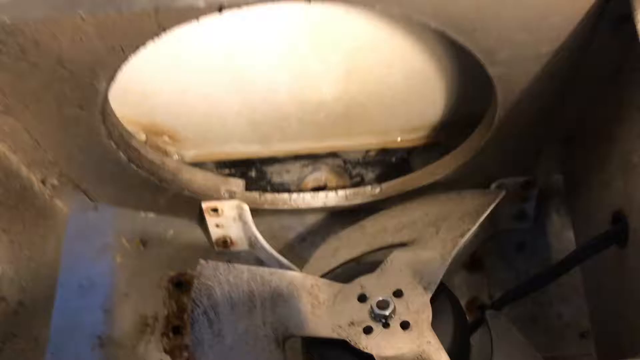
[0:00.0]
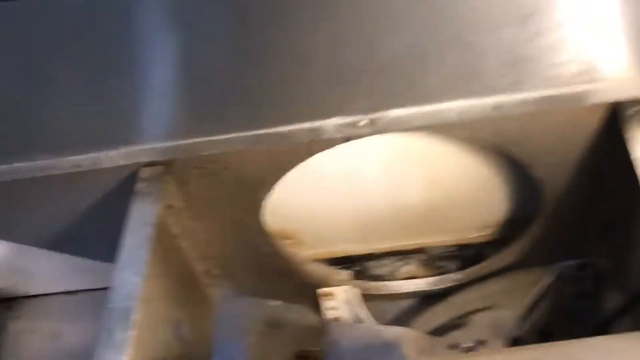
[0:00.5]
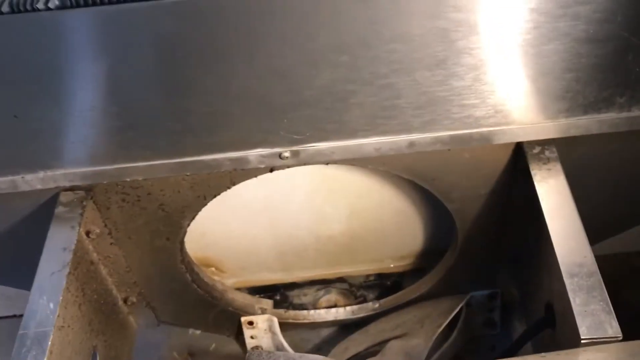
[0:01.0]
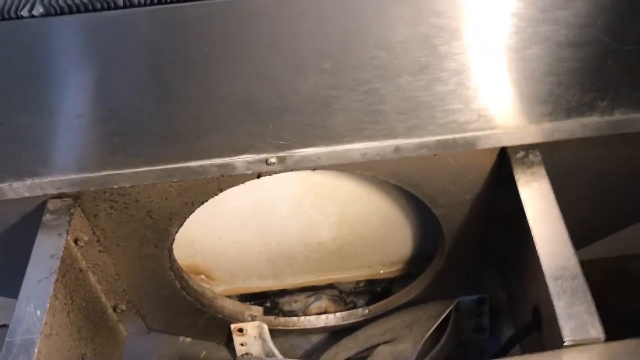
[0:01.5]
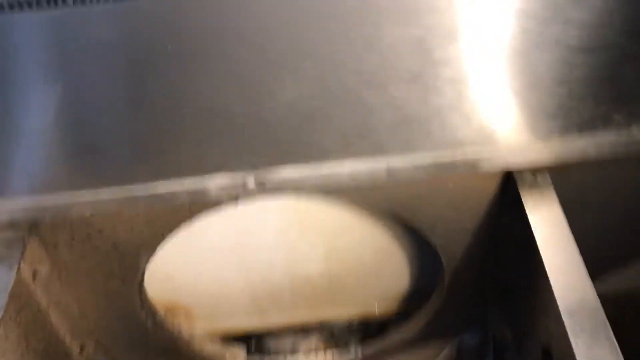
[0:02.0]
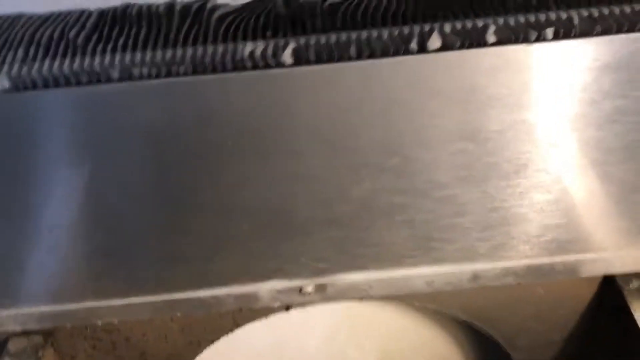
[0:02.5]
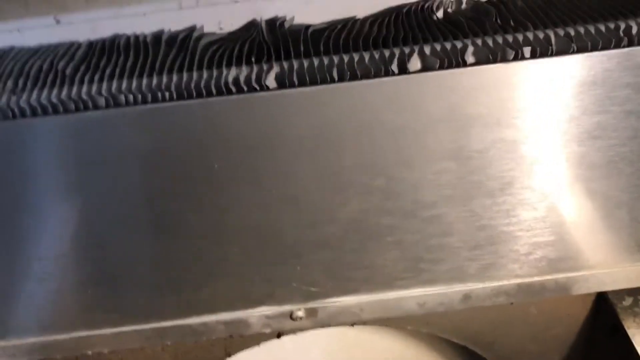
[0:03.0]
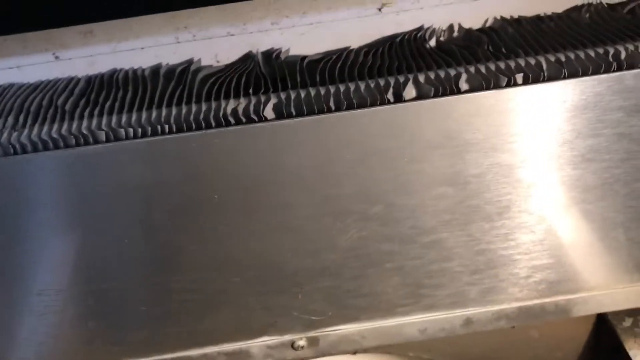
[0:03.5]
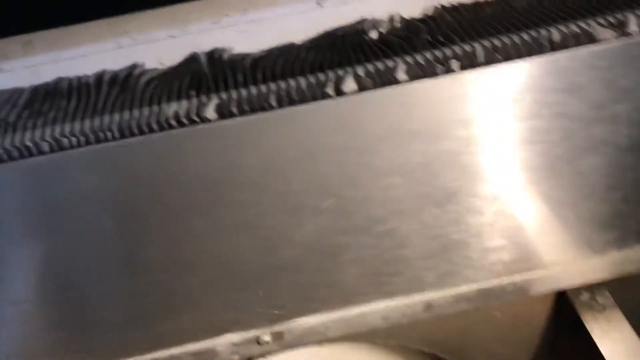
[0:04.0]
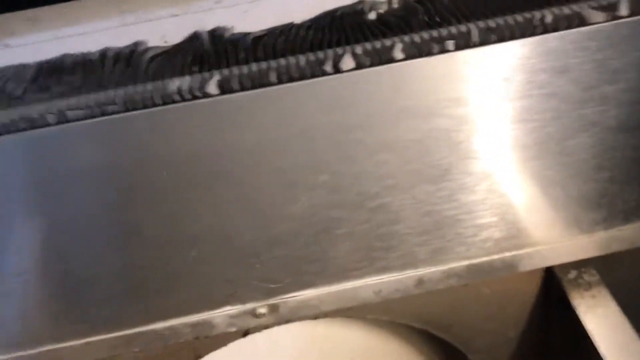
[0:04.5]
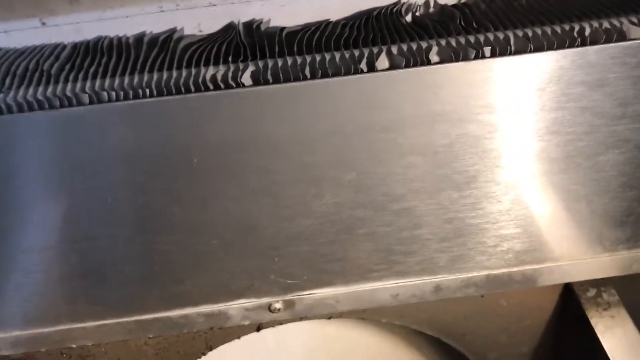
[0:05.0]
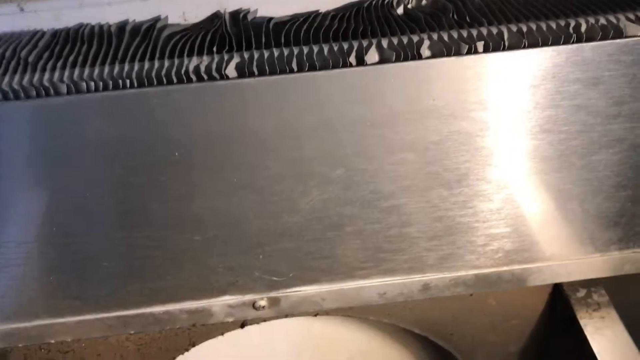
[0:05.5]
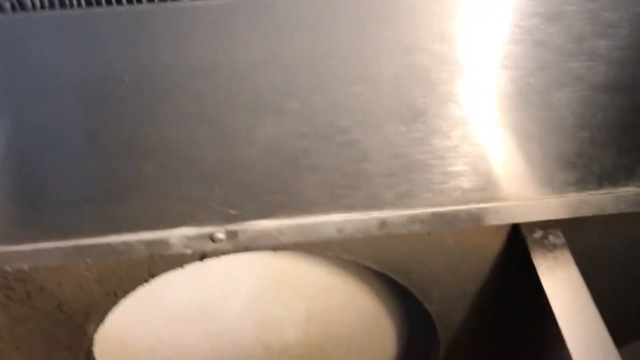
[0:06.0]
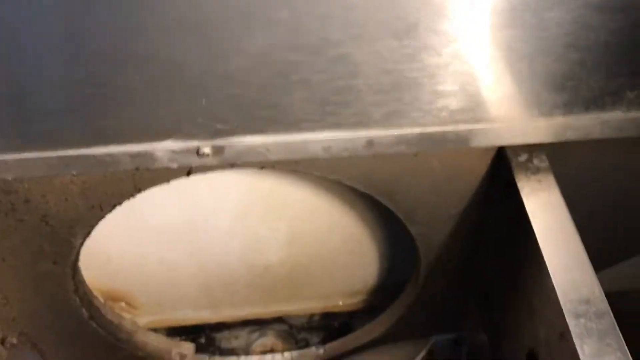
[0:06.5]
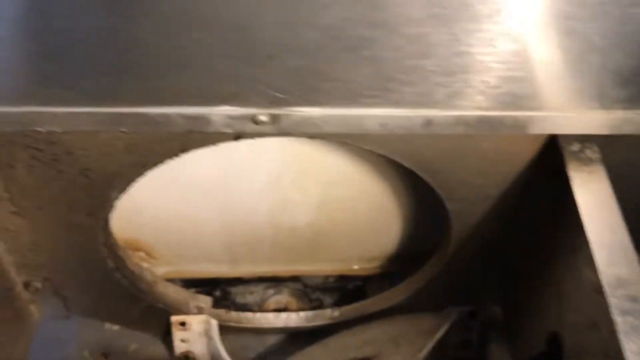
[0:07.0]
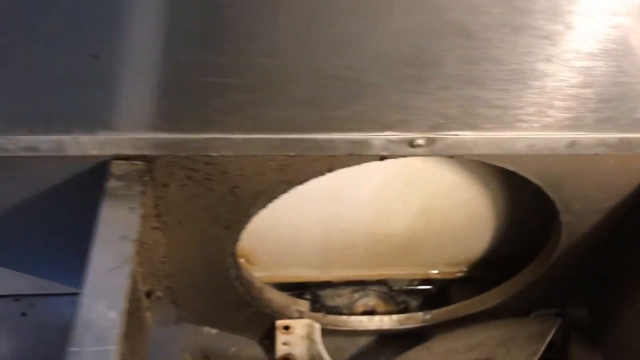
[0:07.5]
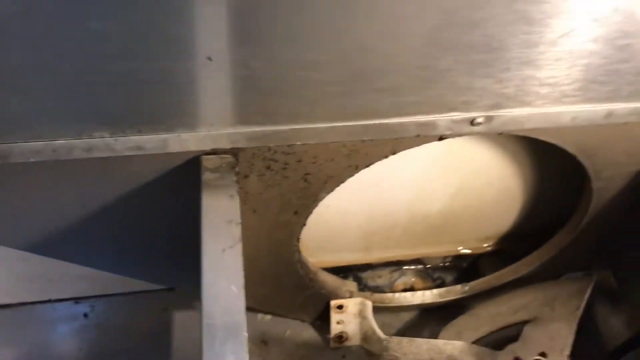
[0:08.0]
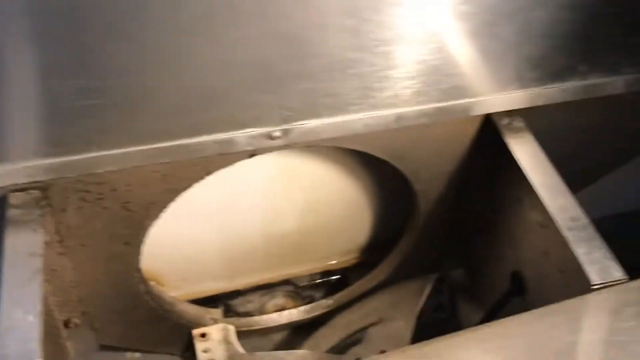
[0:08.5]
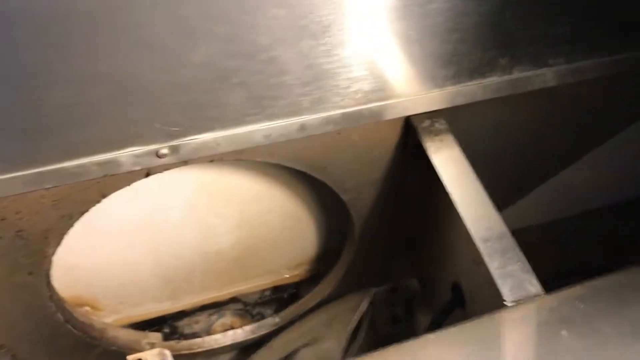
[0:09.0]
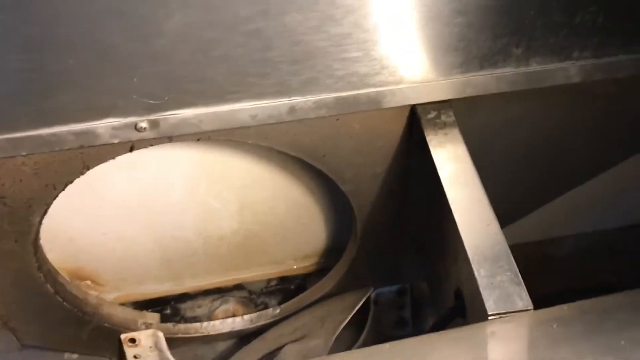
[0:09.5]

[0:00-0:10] The video opens on what appears to be the inside of some sort of metal device, a machine. There is a big hole in the top through which a white portion is visible, possibly part of a table or a part inside the machine. The camera moves slightly up to show a metal ball with a black, rippled, filter-looking item on top that looks like a different material. The camera then moves slowly back down to the hole underneath. Some sort of blade or fan is inside where the hole leads, on the other side of the hole from the white area.